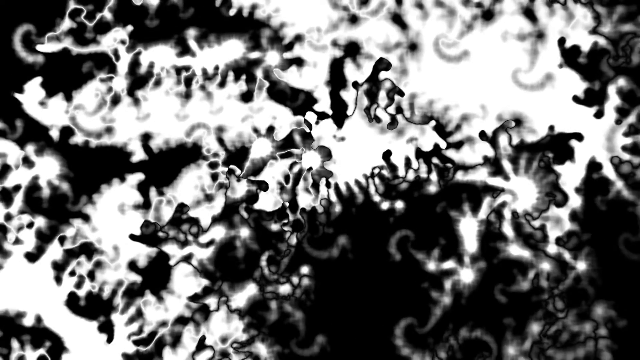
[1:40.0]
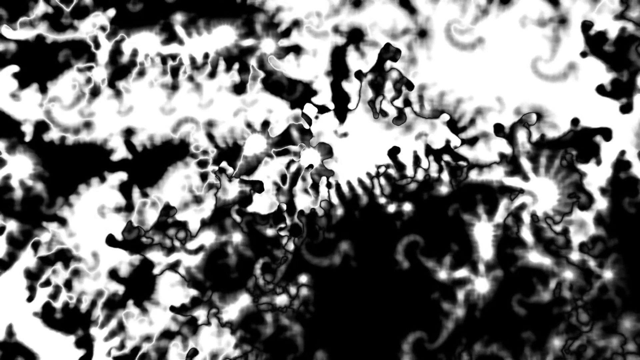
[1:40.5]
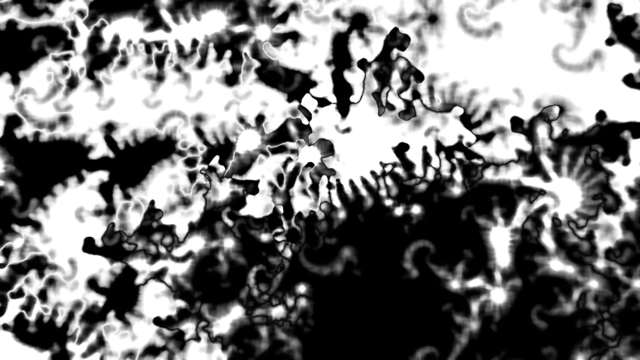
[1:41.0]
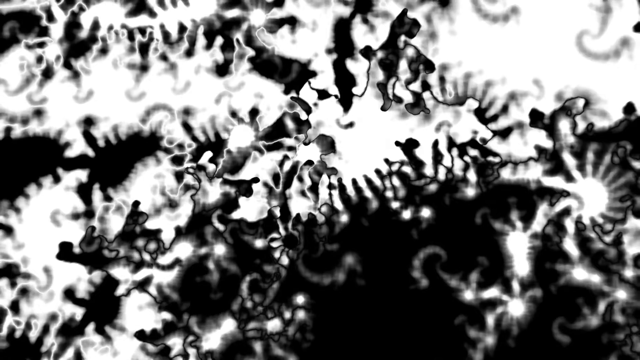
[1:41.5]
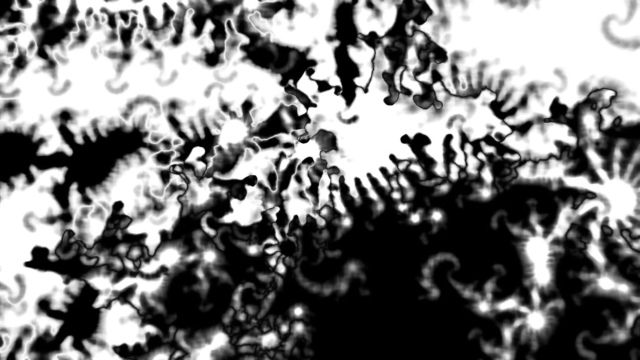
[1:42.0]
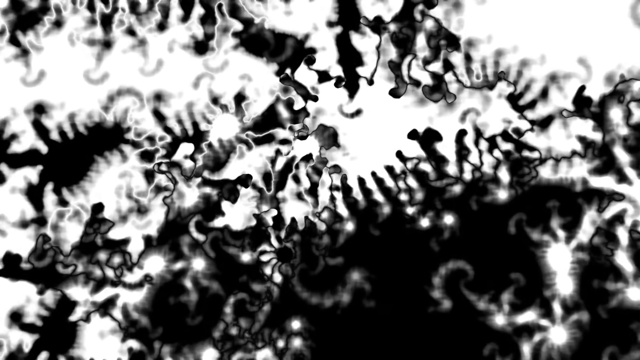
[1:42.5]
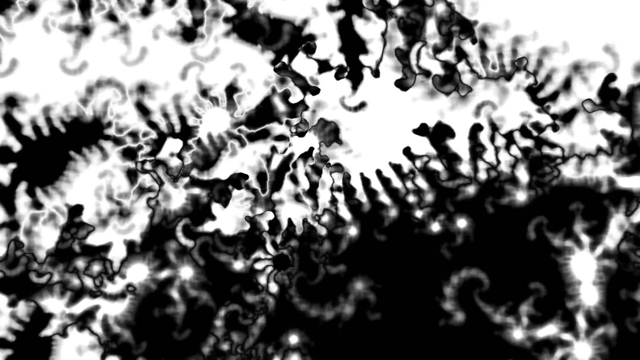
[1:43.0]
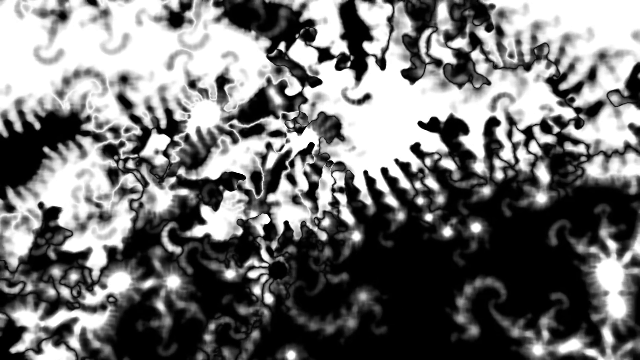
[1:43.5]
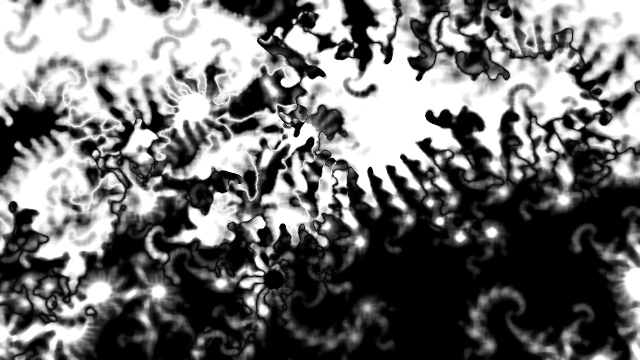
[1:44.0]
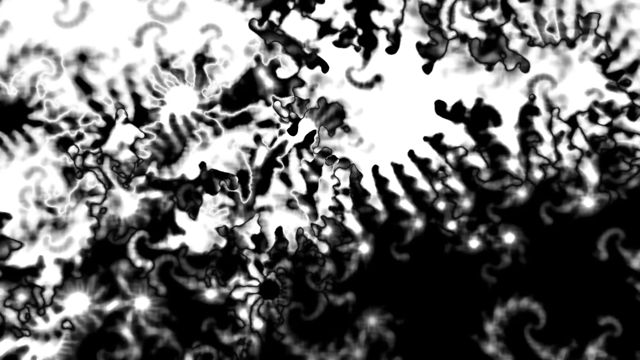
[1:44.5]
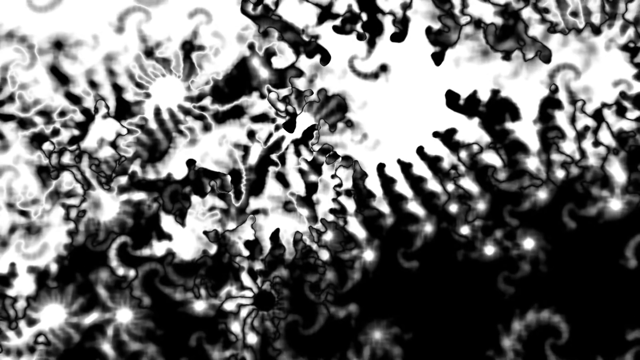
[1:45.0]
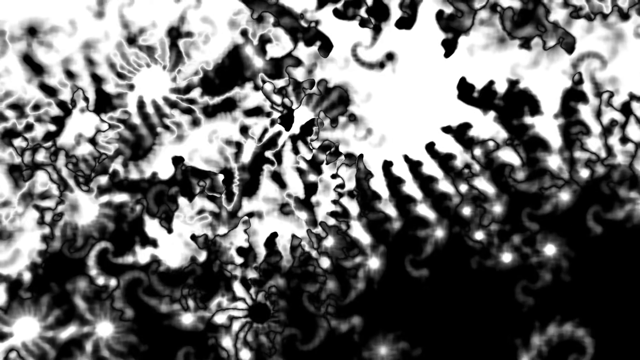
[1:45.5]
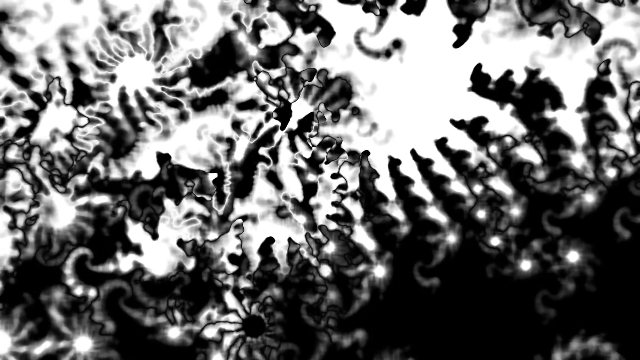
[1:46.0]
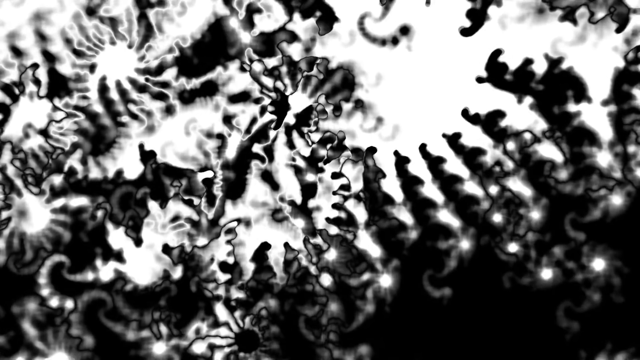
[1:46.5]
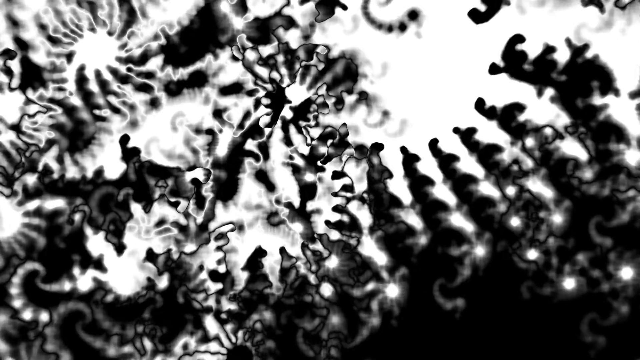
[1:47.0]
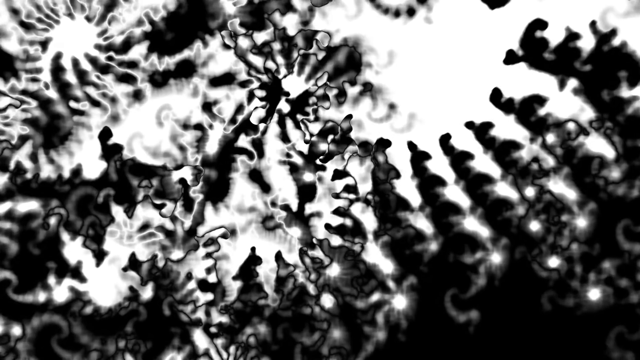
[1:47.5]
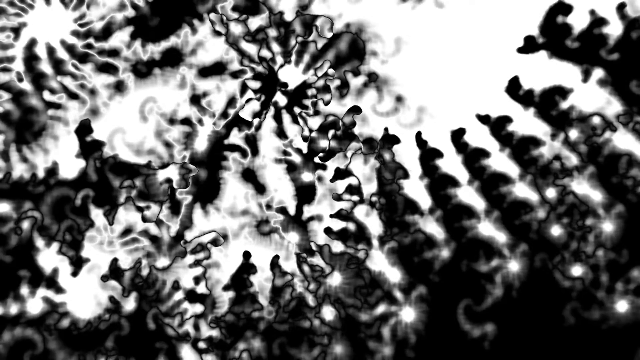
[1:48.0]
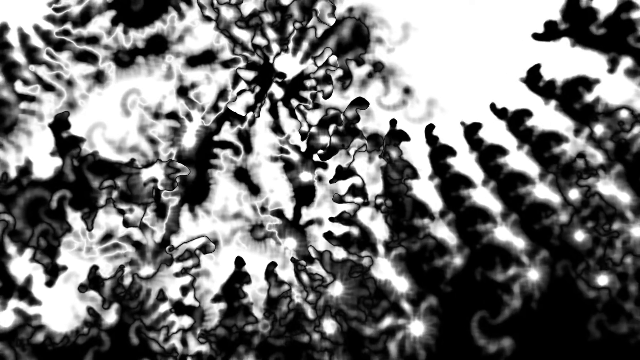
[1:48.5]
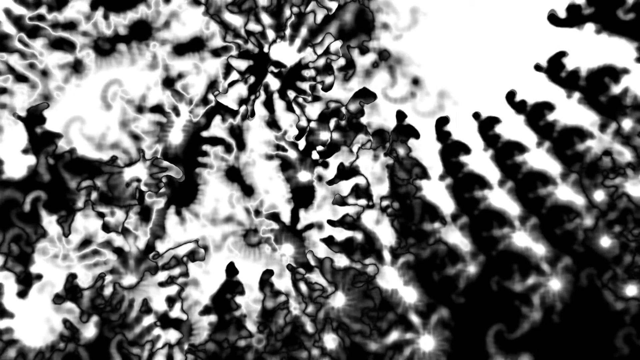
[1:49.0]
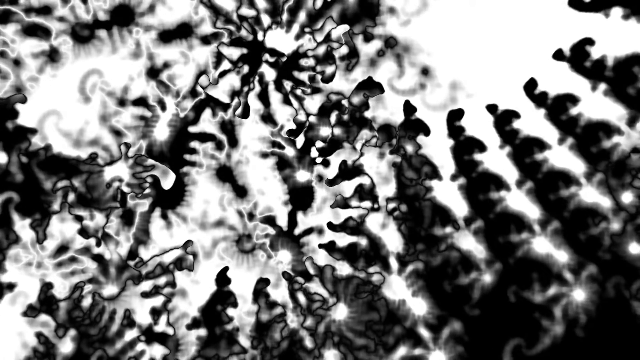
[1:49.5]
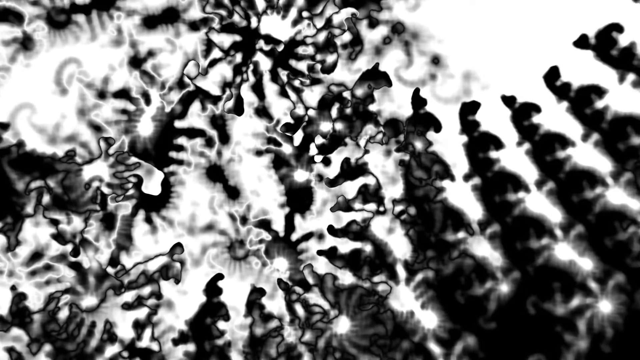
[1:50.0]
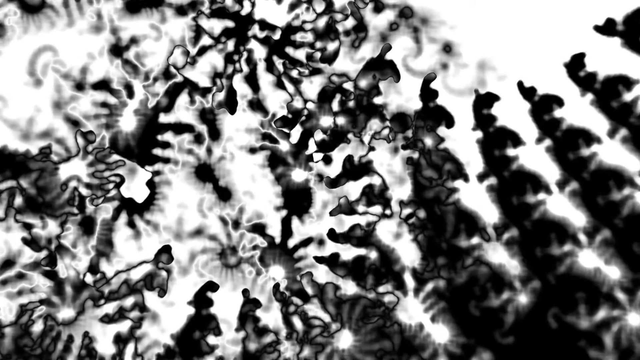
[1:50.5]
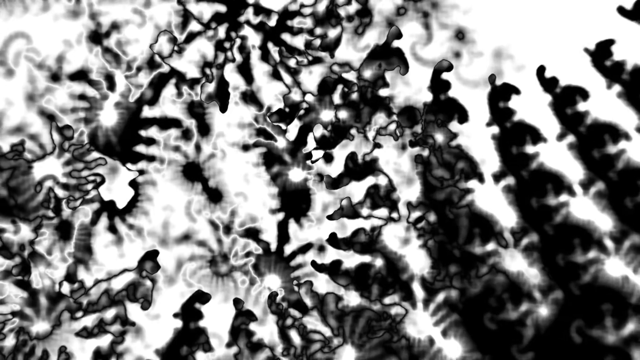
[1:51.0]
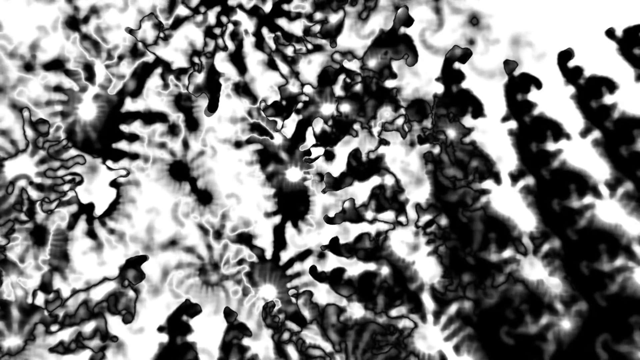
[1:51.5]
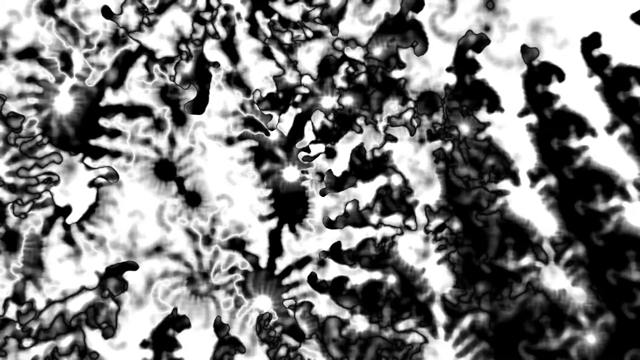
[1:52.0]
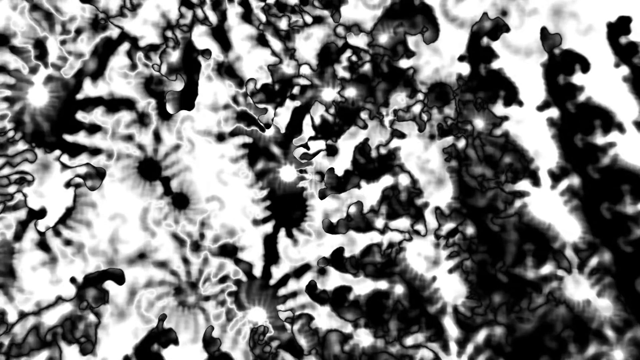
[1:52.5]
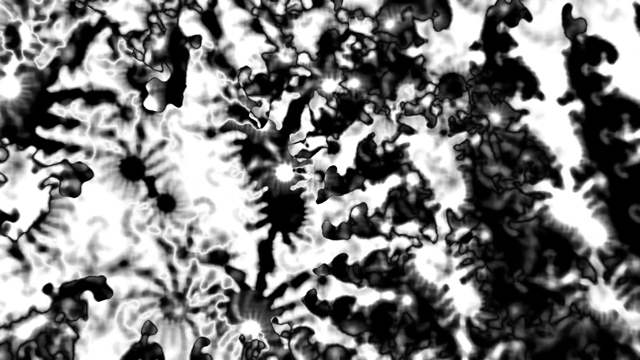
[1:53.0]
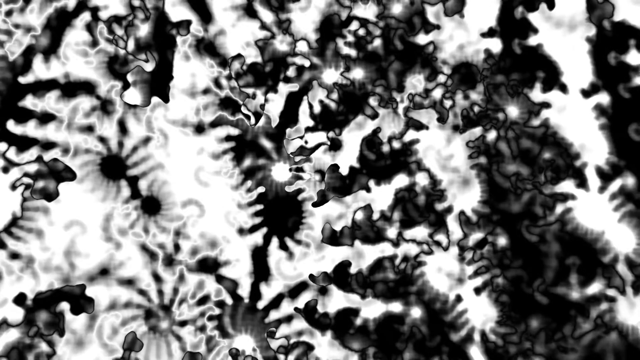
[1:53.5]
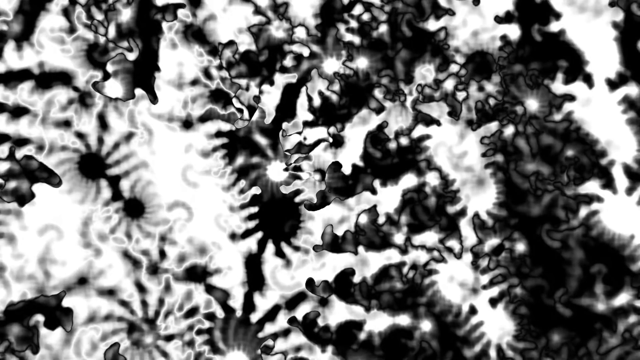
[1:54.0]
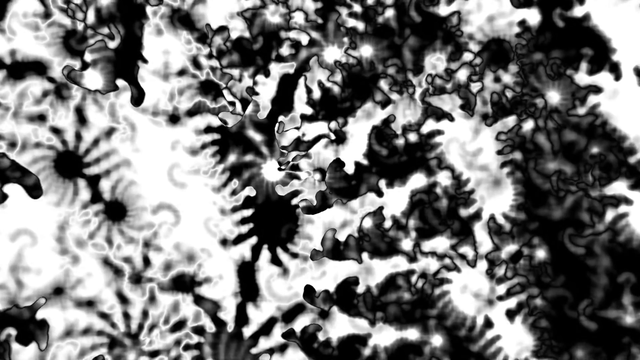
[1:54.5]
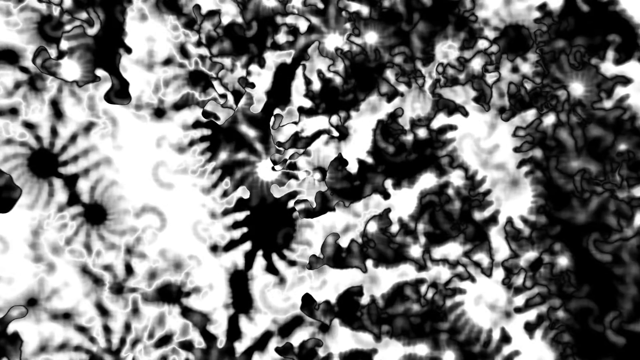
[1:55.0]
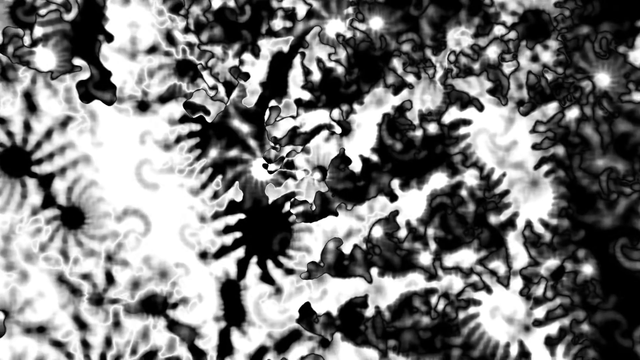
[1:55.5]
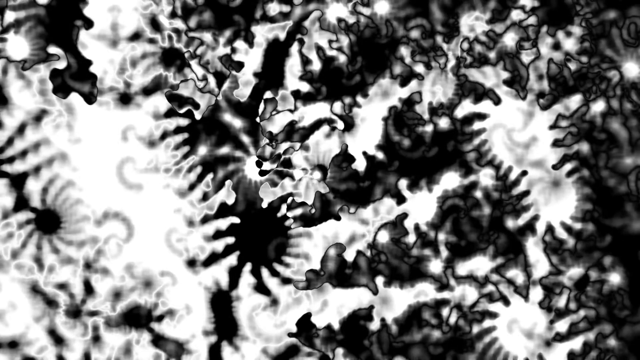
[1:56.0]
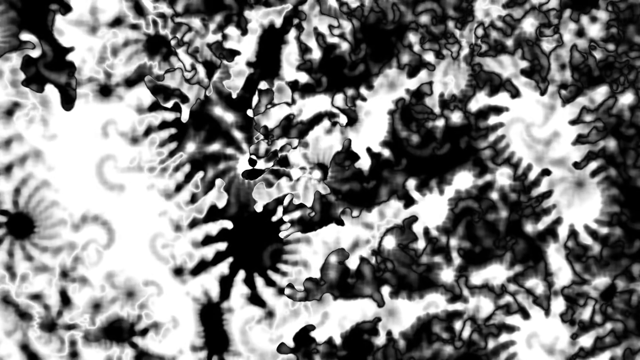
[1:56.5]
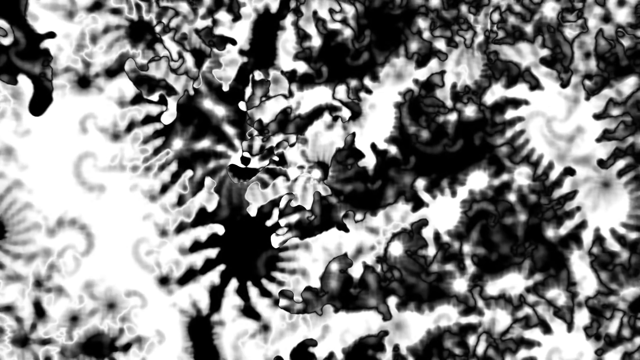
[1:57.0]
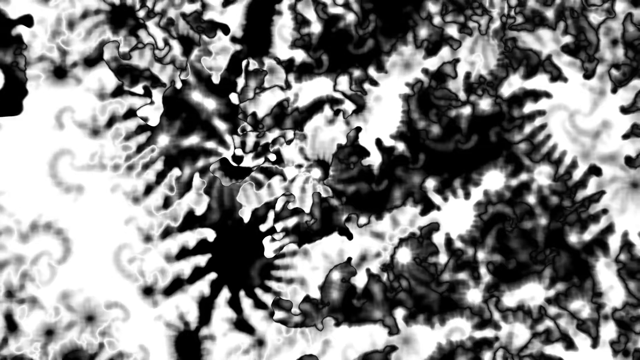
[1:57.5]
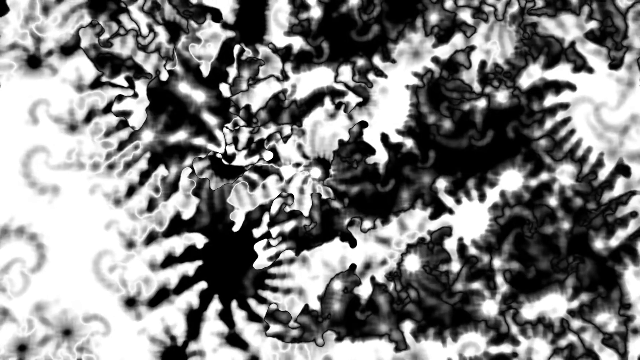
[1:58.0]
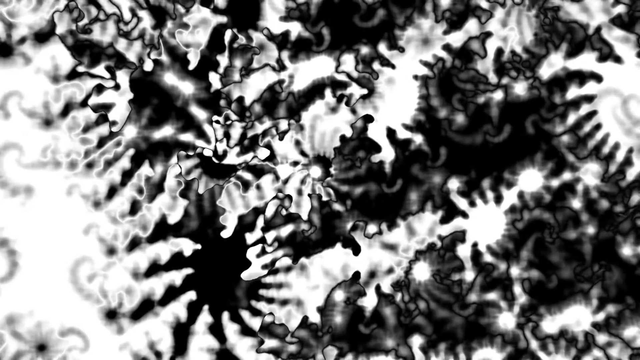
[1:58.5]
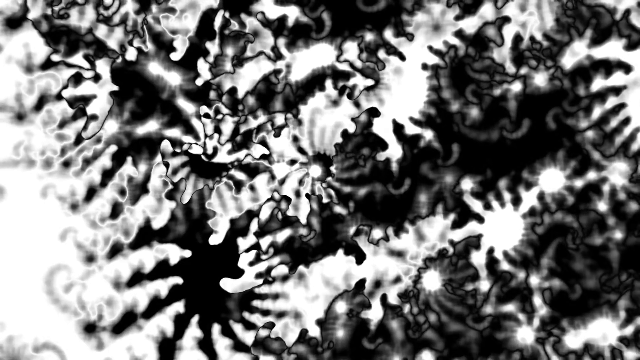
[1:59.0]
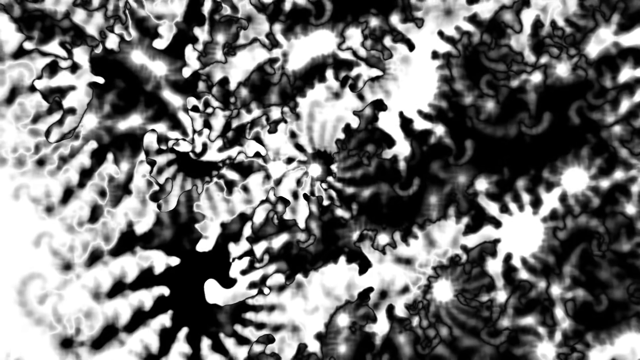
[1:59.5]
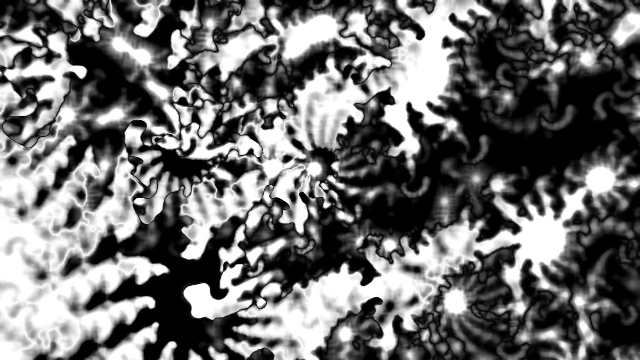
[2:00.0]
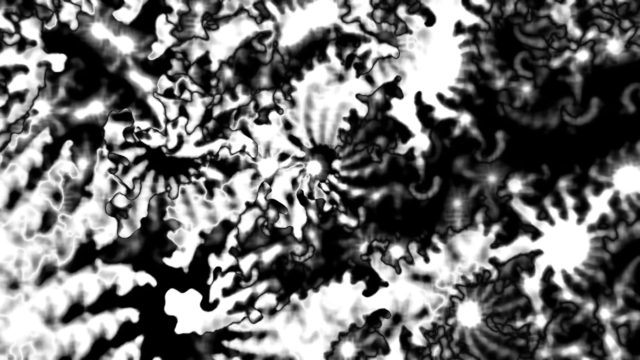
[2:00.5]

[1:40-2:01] The same kind of imagery continues, showing a picture of something.